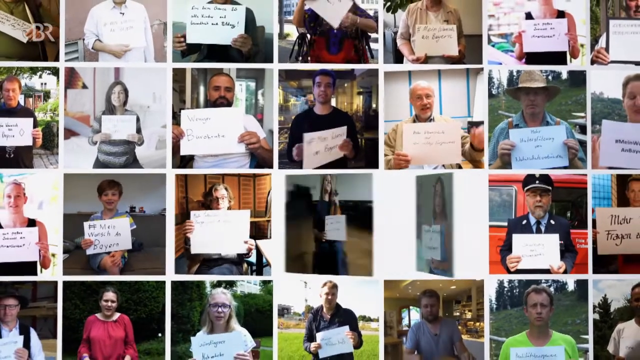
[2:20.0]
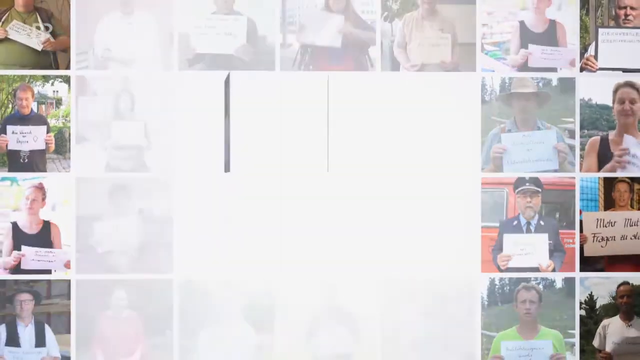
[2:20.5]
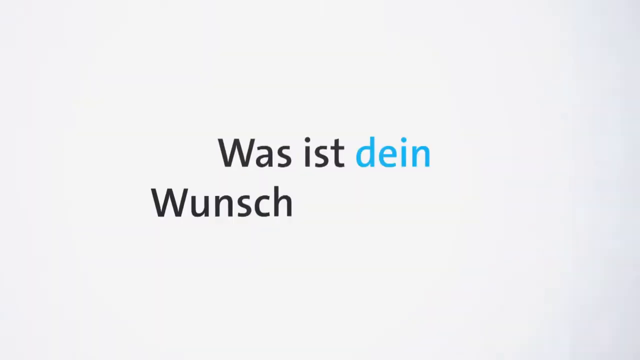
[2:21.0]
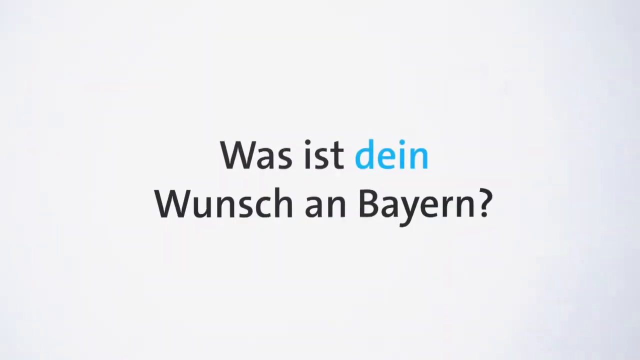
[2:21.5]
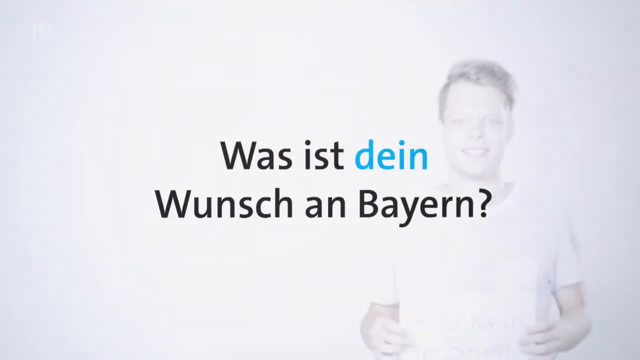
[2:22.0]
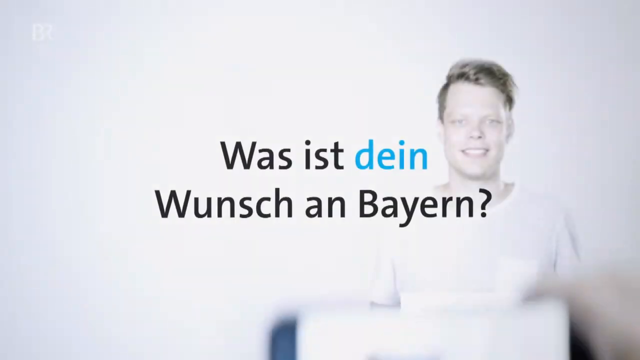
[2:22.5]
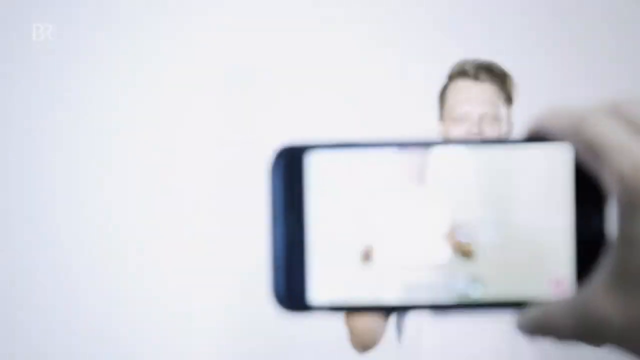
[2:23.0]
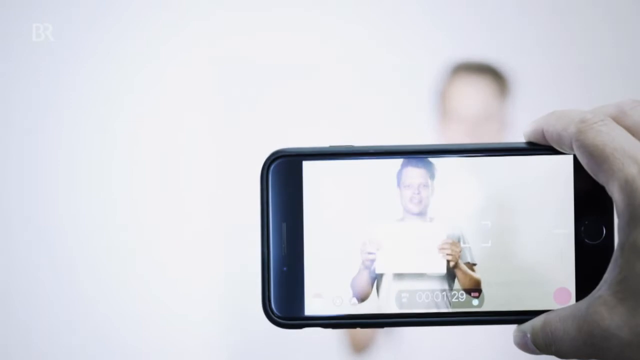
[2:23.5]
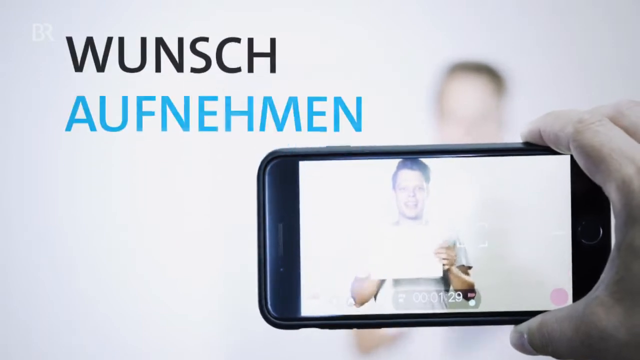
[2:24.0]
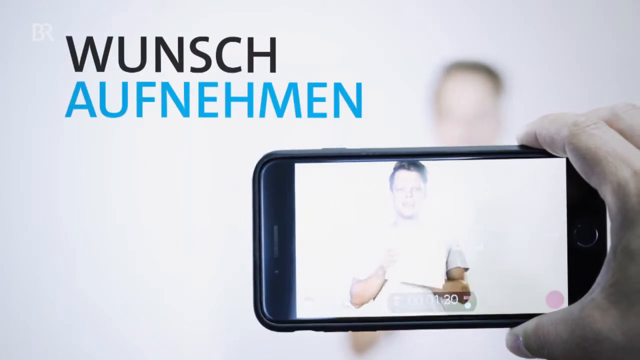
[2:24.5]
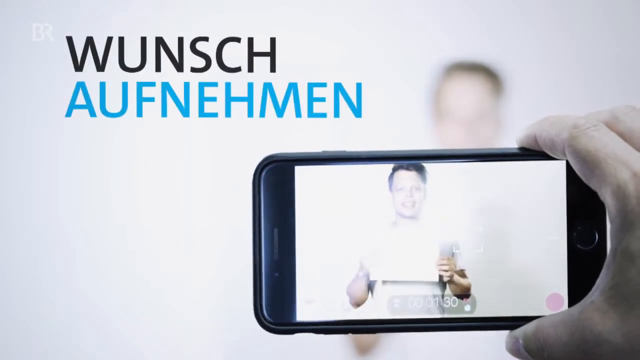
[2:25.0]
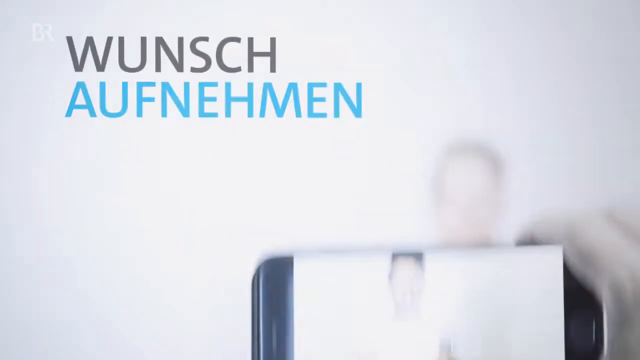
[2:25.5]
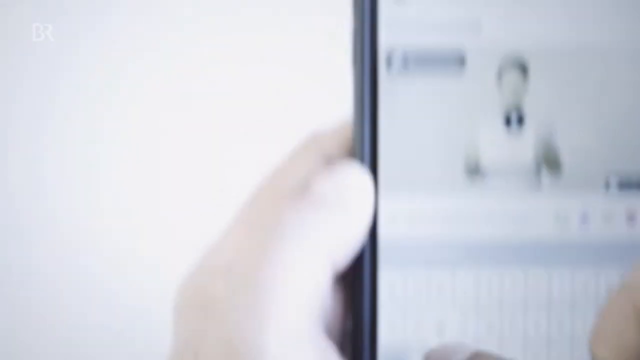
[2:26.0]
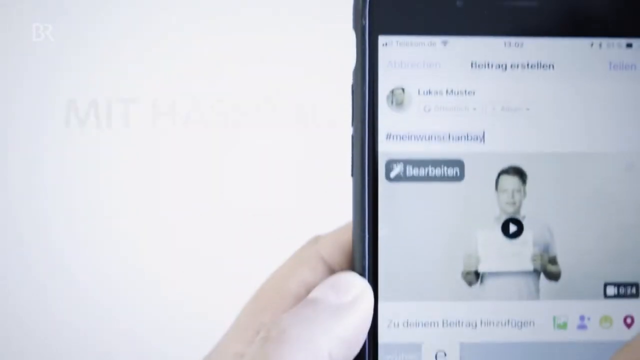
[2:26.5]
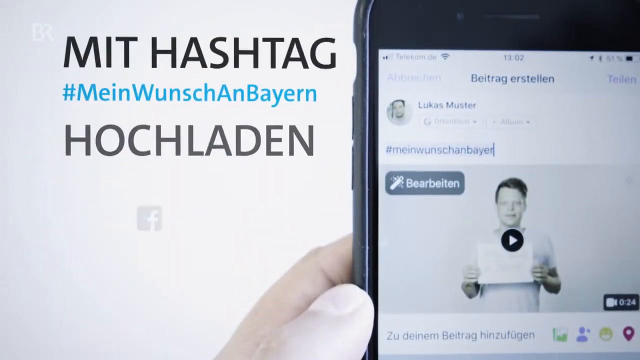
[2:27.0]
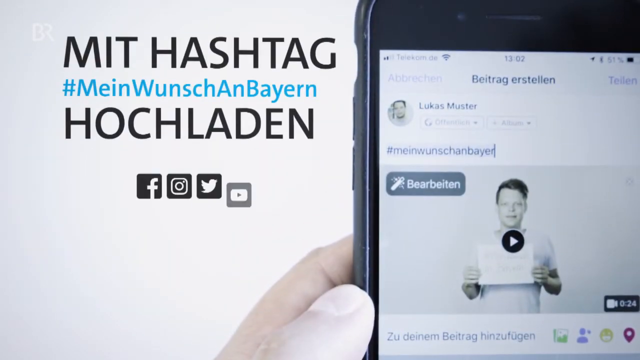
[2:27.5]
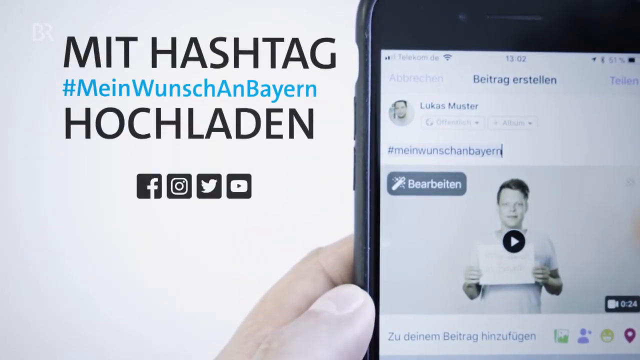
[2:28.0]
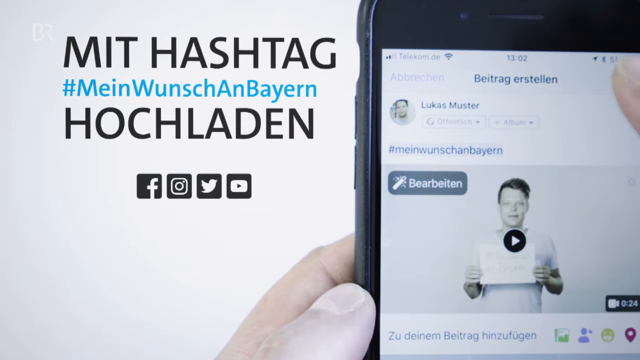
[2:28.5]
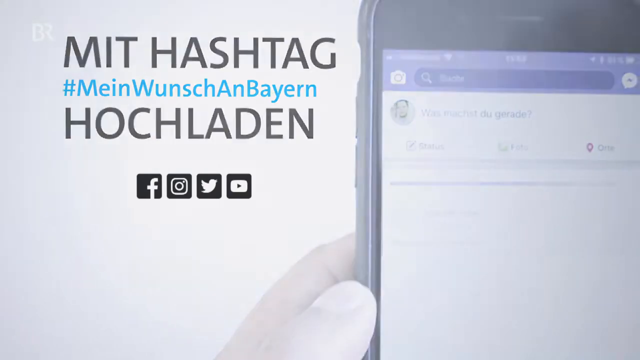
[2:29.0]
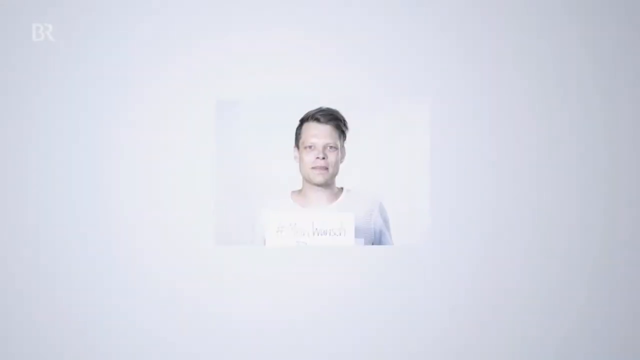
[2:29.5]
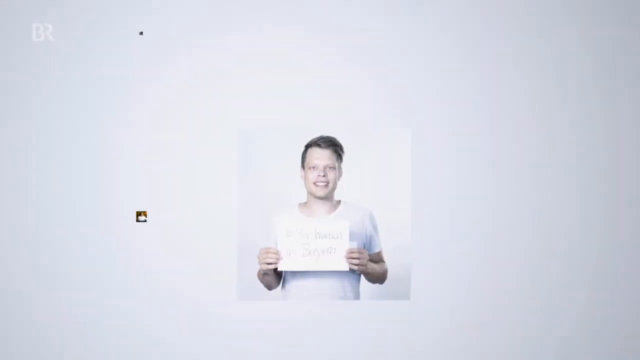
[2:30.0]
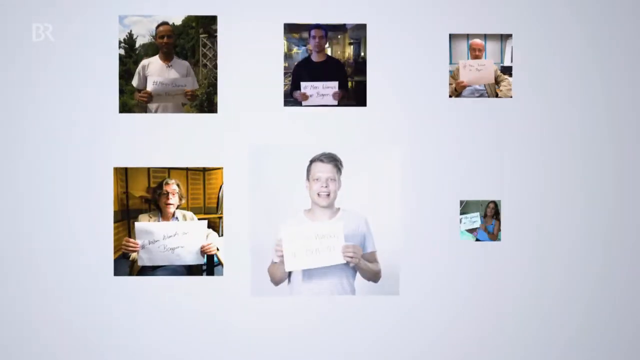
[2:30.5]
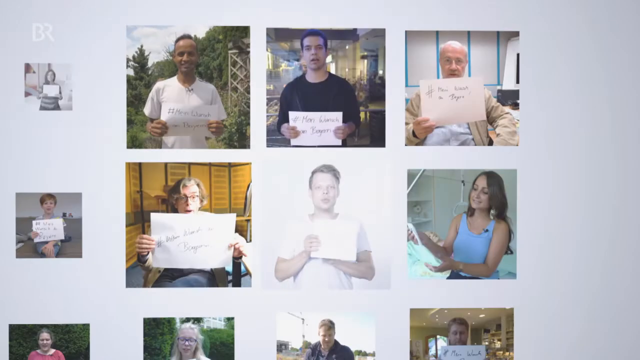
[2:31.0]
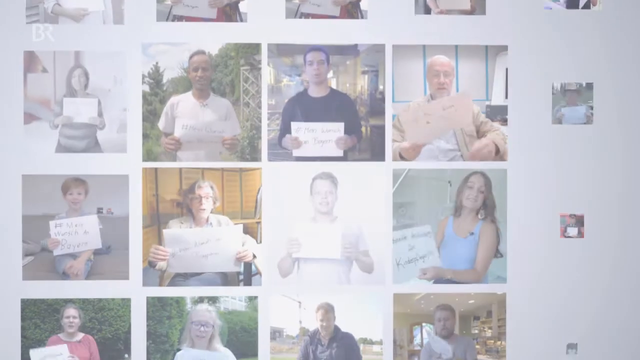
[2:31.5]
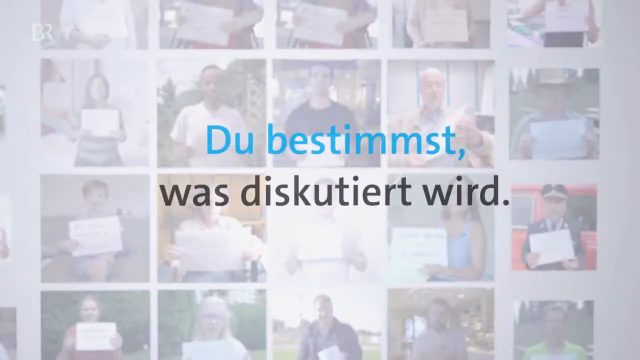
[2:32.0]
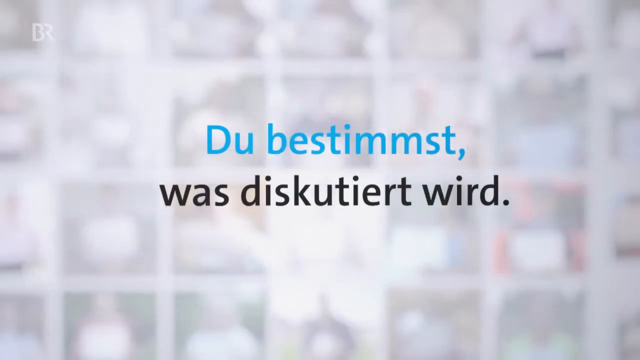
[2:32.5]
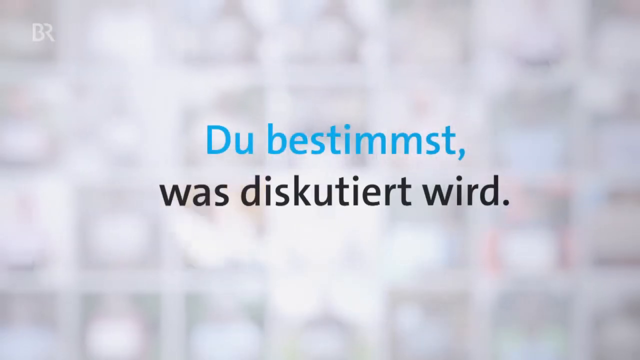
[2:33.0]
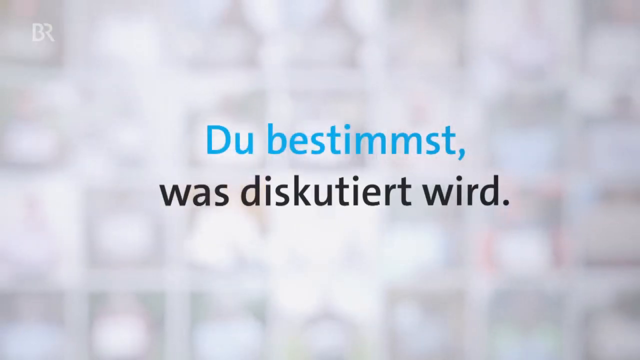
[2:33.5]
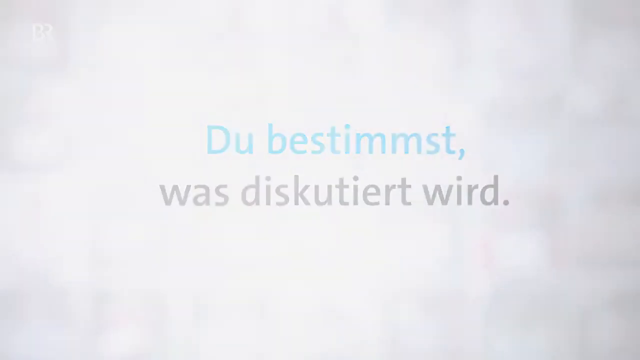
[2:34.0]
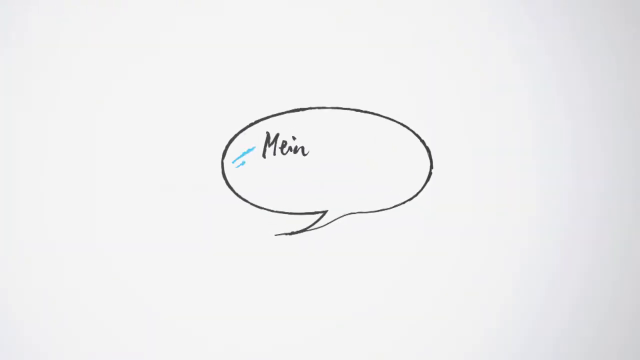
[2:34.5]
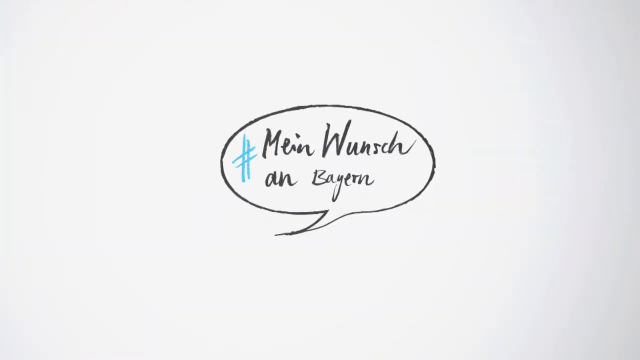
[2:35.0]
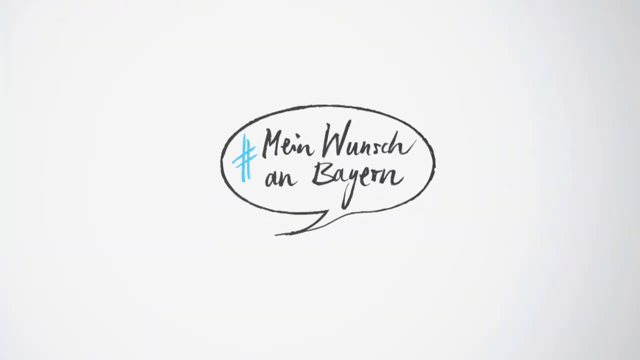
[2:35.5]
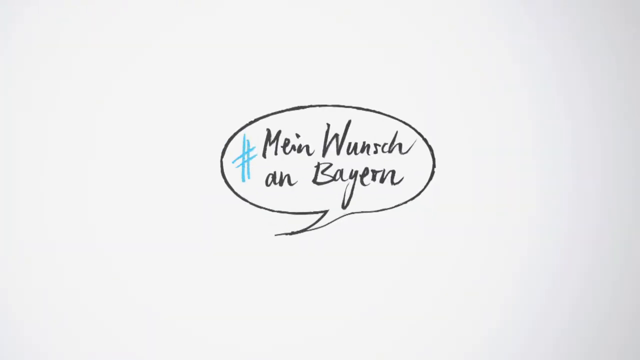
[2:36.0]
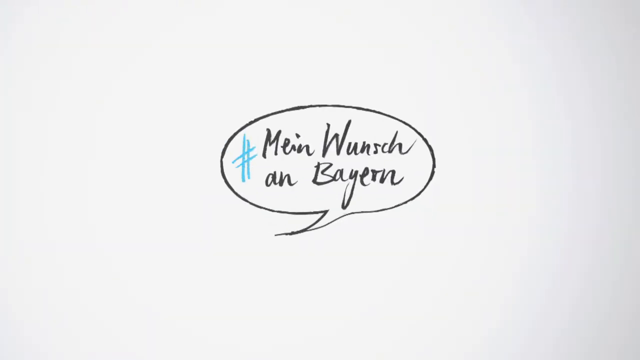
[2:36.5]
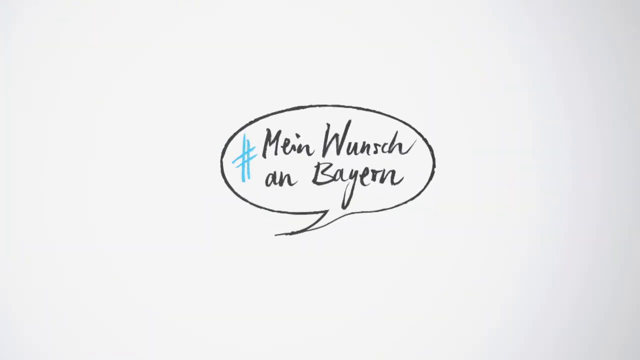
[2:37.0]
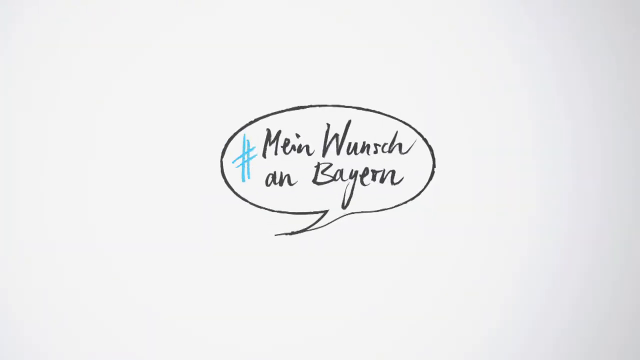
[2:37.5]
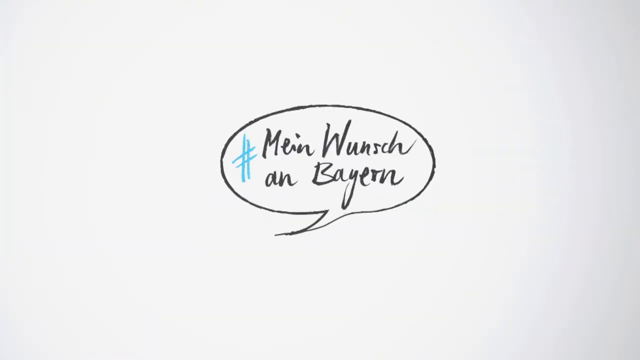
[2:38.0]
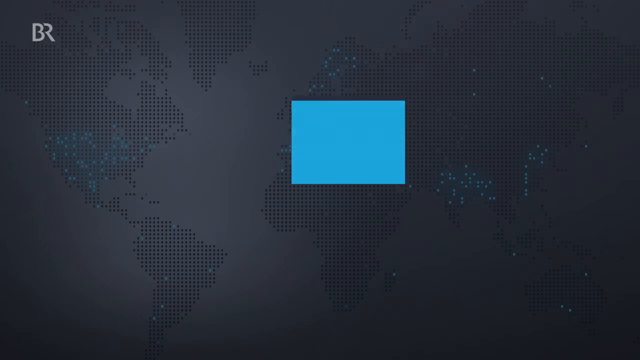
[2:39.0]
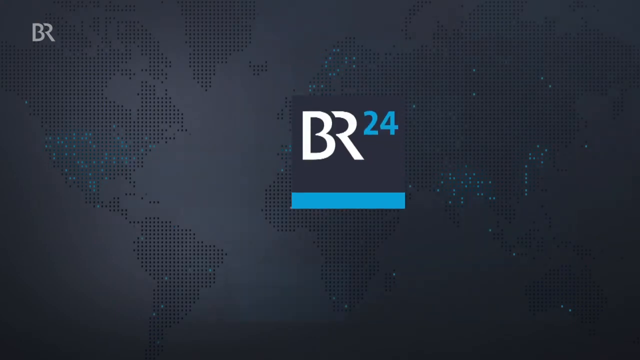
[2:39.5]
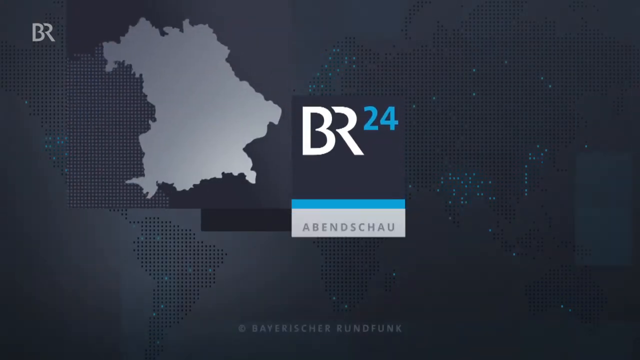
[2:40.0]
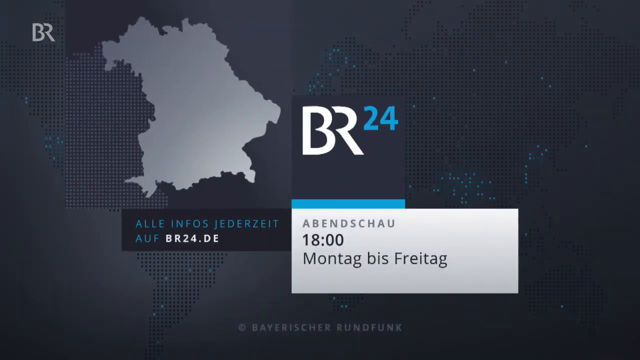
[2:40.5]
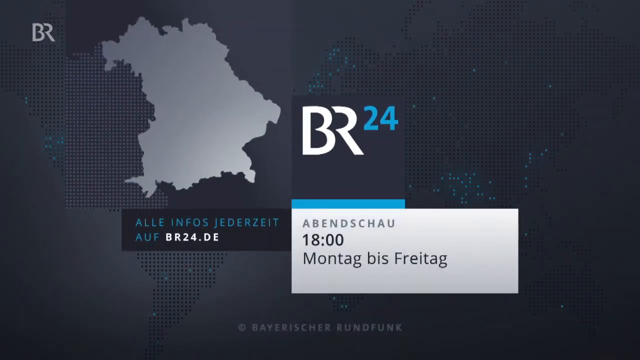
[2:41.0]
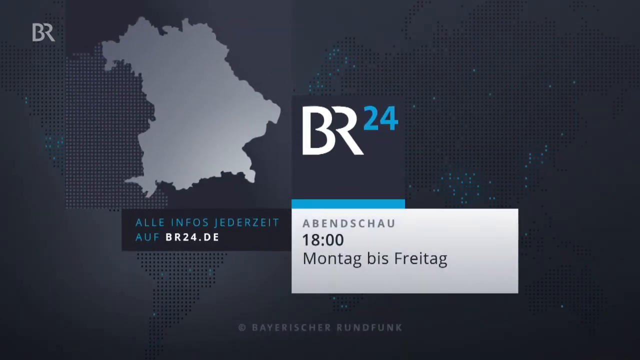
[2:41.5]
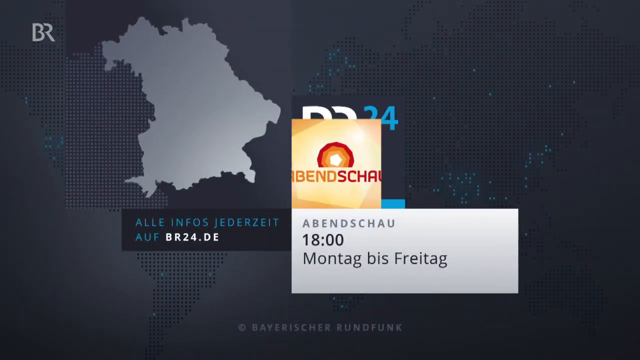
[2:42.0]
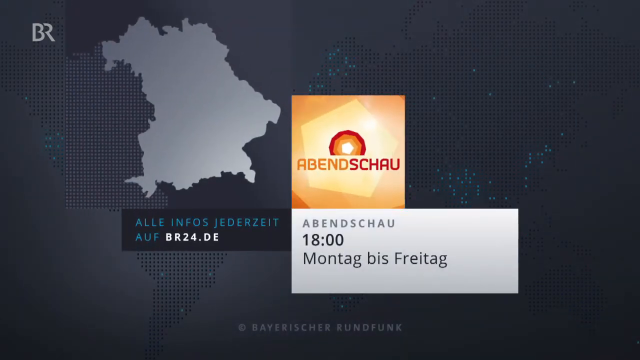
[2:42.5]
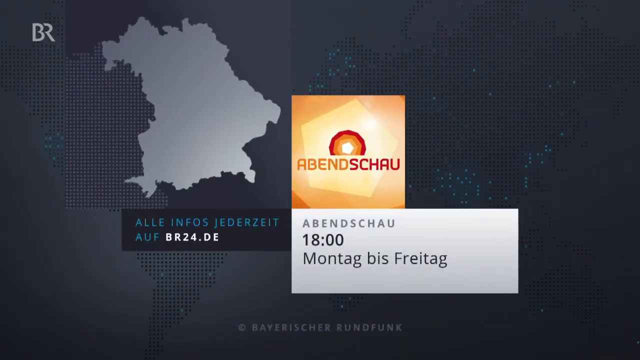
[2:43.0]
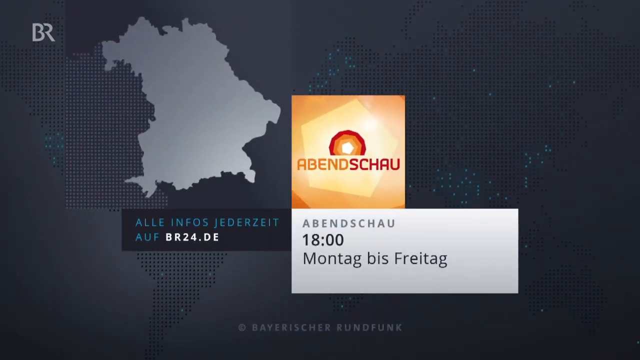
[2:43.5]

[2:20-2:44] Many people, about 28, appear on screen, all holding up signs. Text reads "Was ist dein Wunsch an Bayern?", then text with the words "Wunsch aufnehmen". Next, text begins "Mit #Mein Wunsch an Bayern", and a phone is shown along with more people holding up signs. Finally, text reads "Du bestimmst, was diskutiert wird."